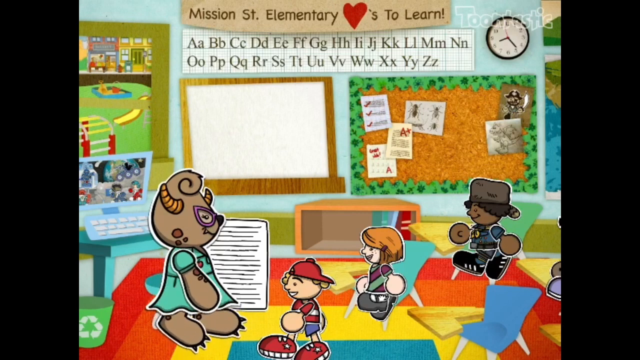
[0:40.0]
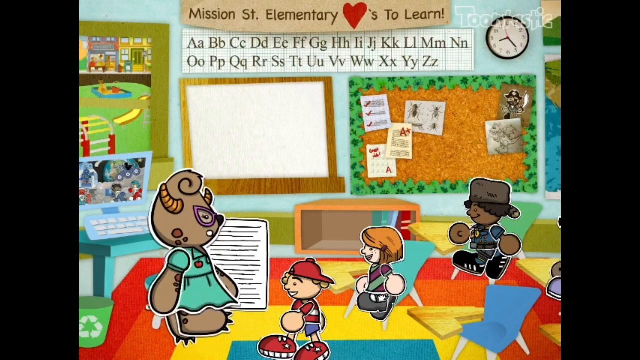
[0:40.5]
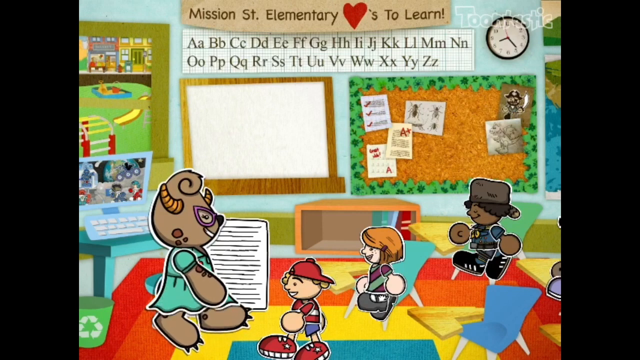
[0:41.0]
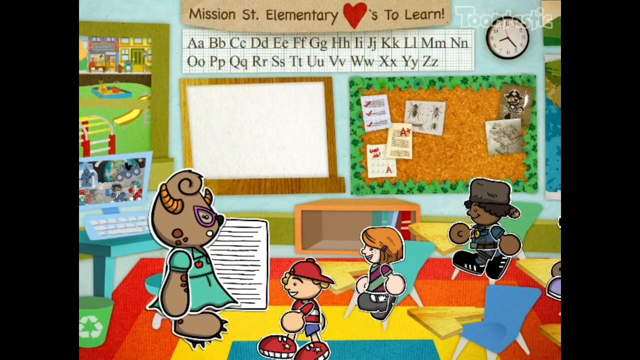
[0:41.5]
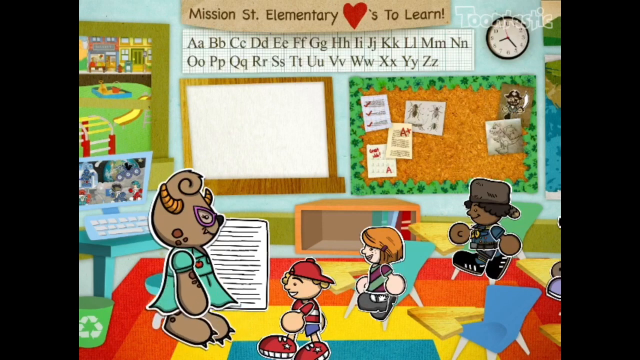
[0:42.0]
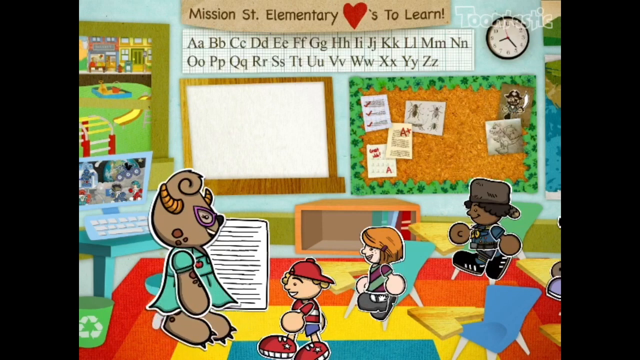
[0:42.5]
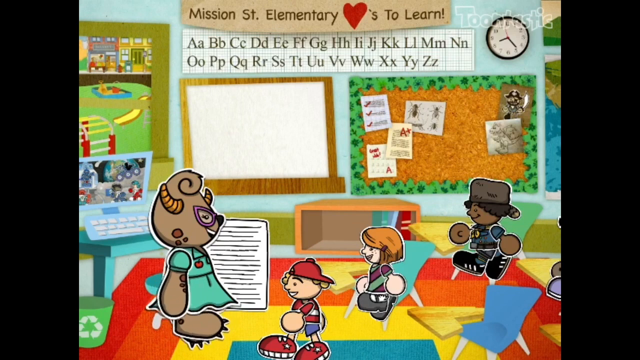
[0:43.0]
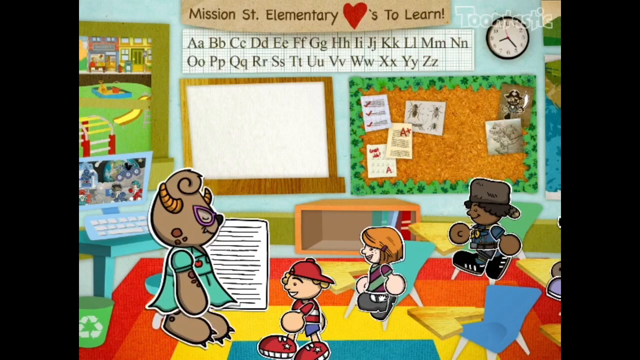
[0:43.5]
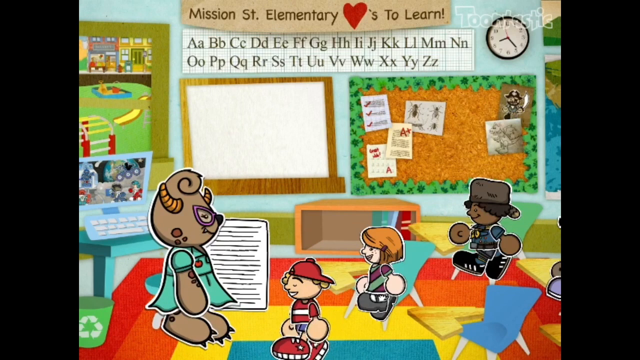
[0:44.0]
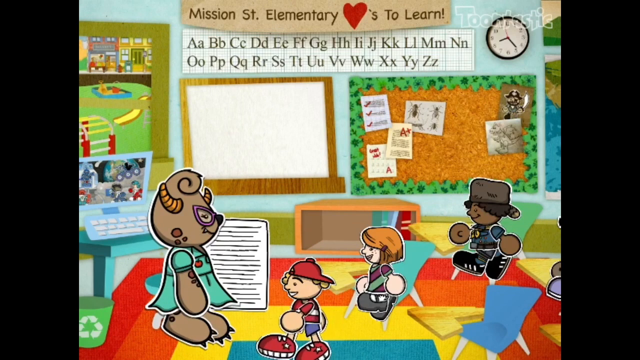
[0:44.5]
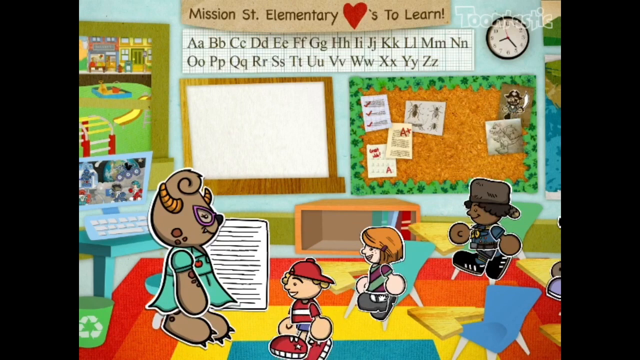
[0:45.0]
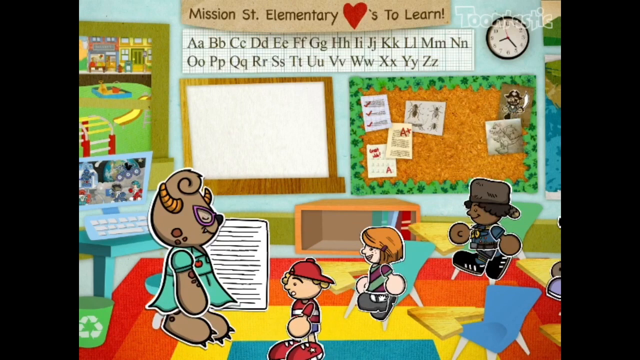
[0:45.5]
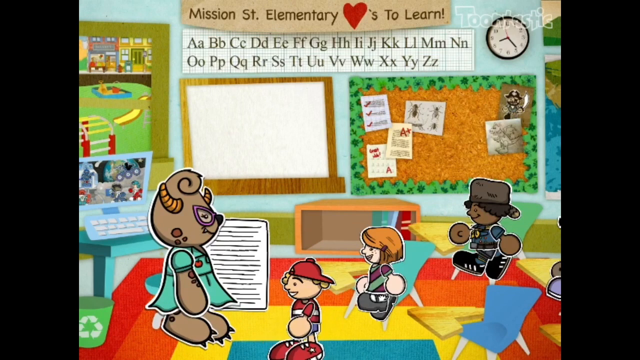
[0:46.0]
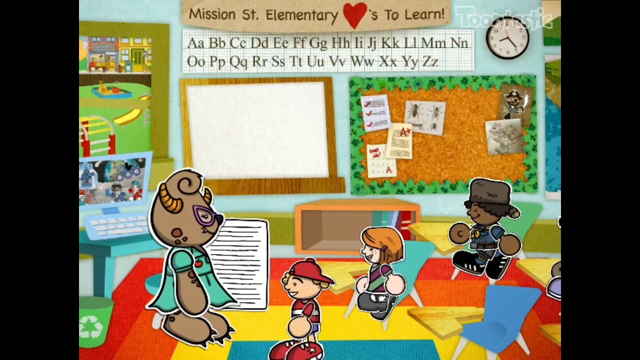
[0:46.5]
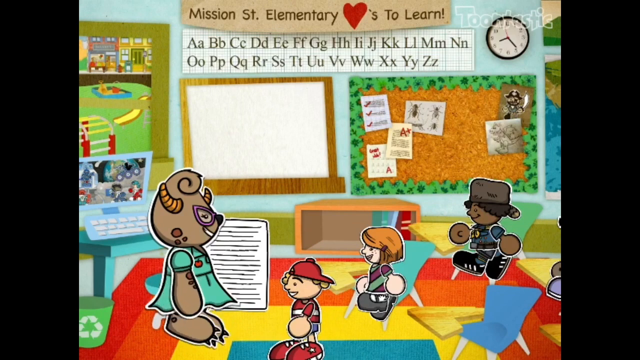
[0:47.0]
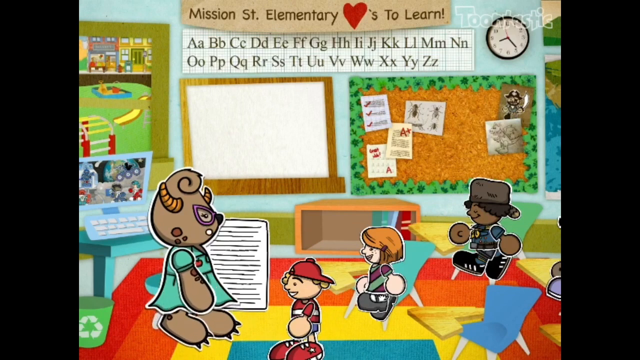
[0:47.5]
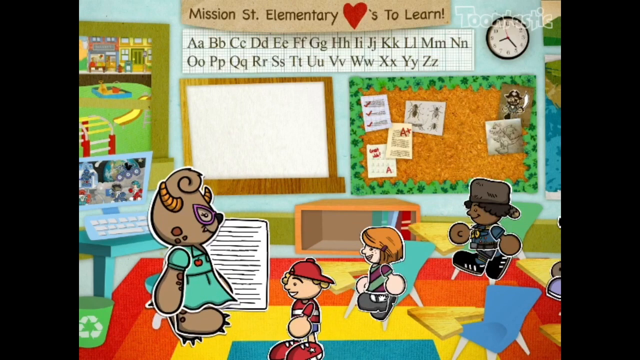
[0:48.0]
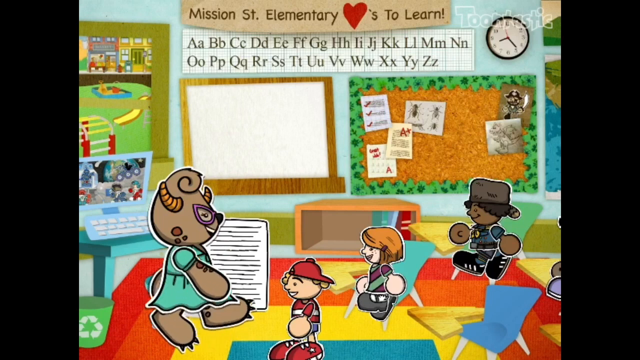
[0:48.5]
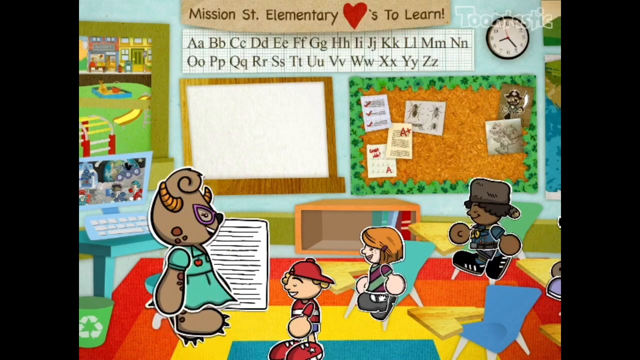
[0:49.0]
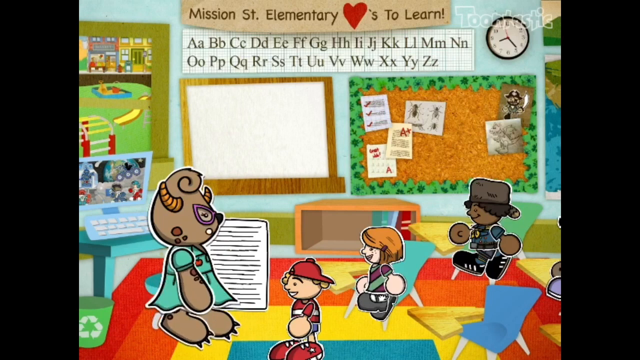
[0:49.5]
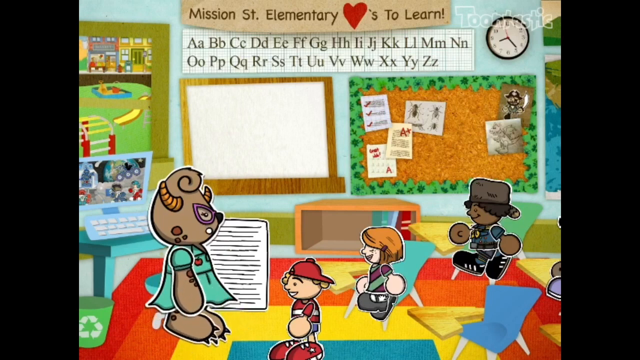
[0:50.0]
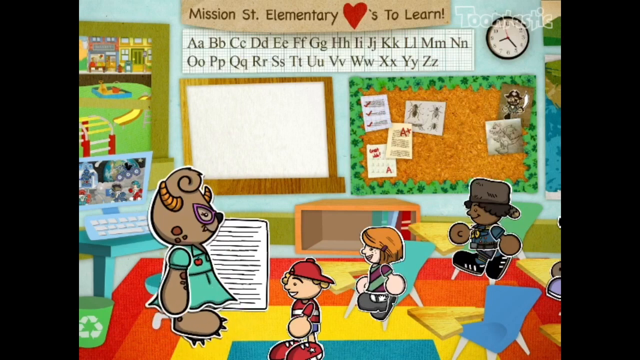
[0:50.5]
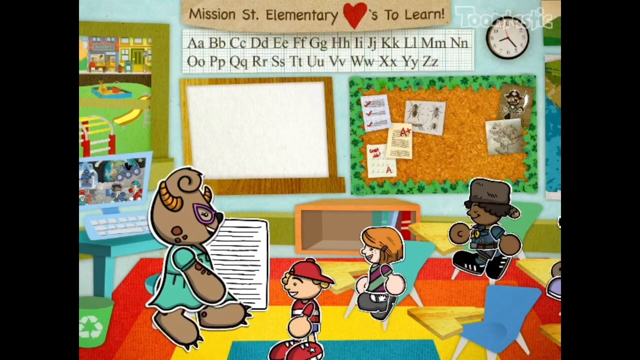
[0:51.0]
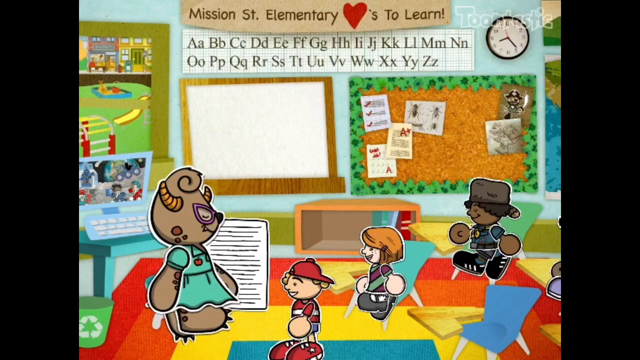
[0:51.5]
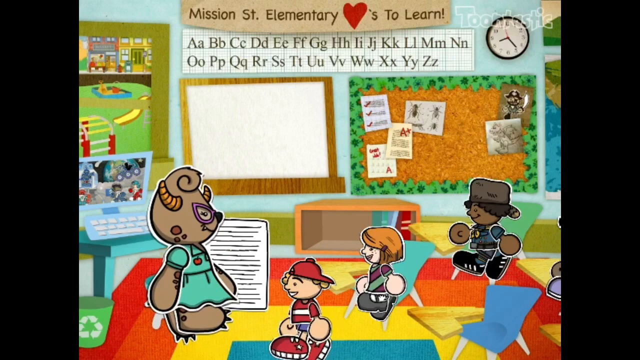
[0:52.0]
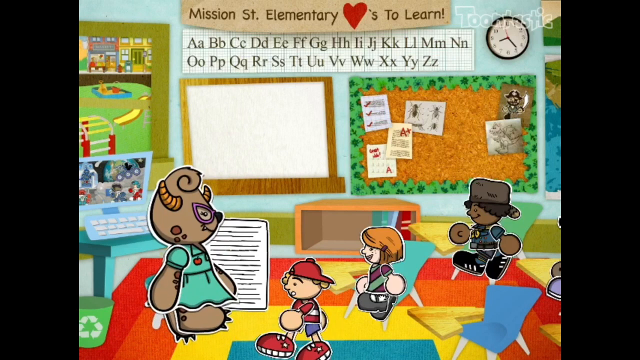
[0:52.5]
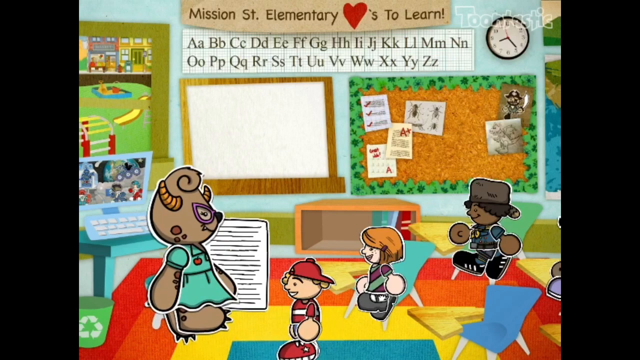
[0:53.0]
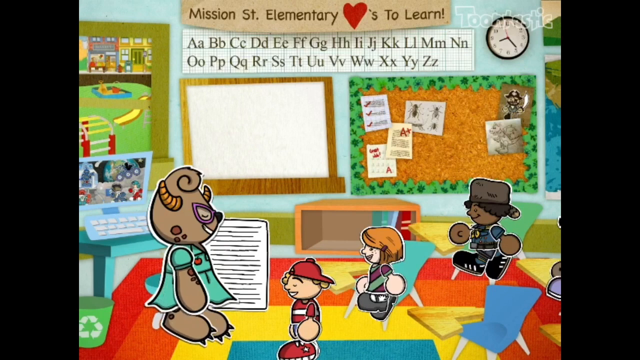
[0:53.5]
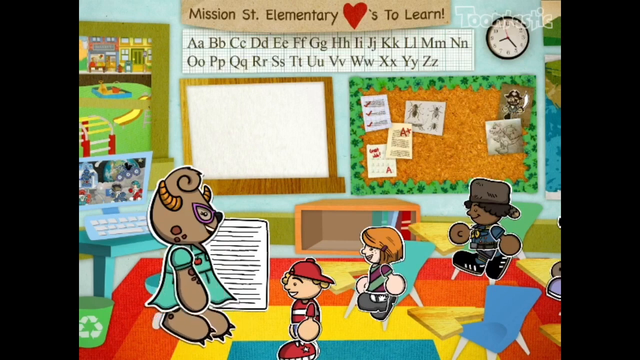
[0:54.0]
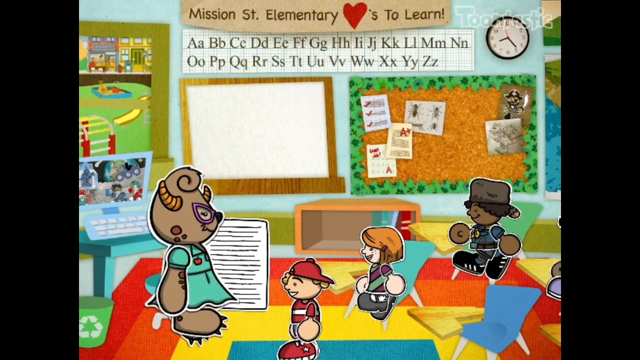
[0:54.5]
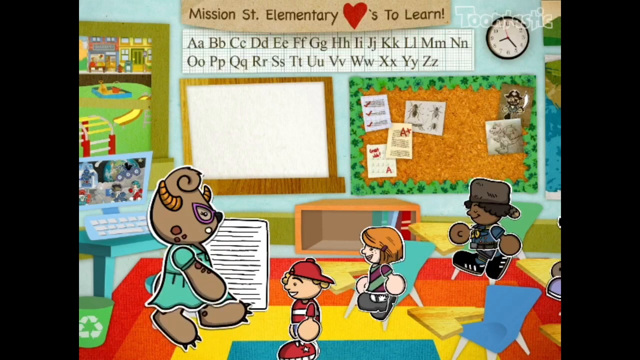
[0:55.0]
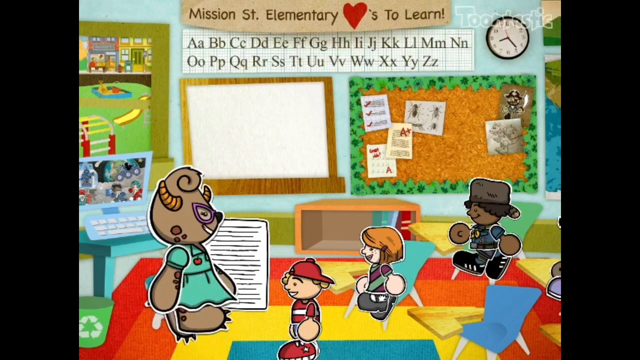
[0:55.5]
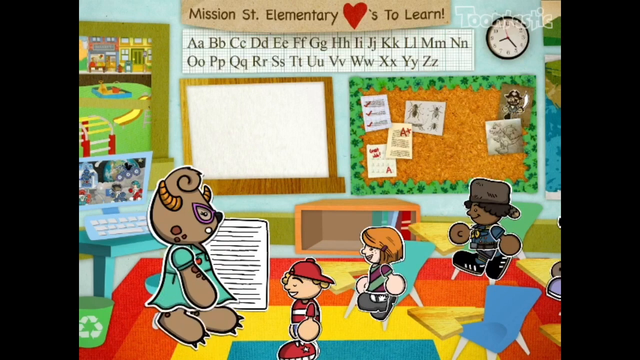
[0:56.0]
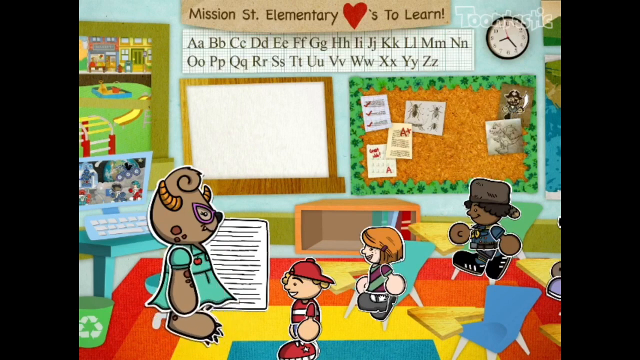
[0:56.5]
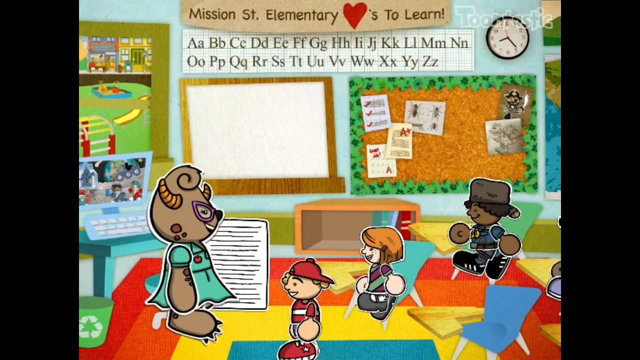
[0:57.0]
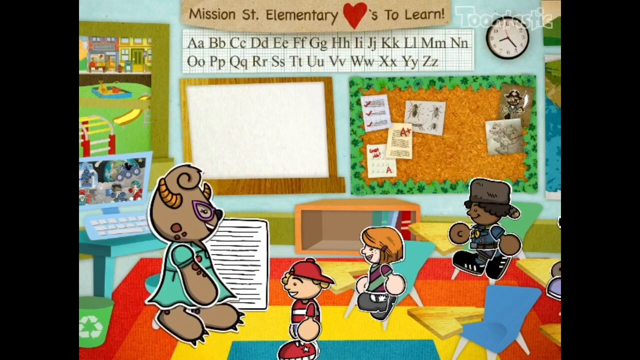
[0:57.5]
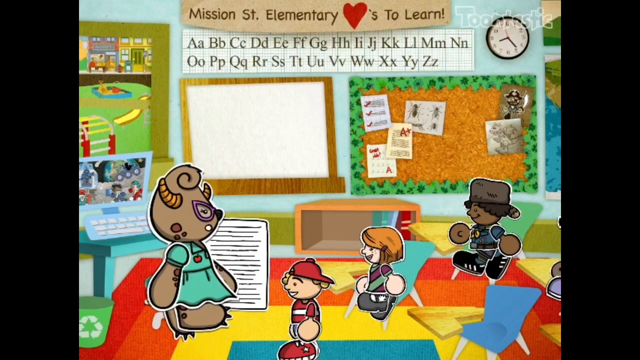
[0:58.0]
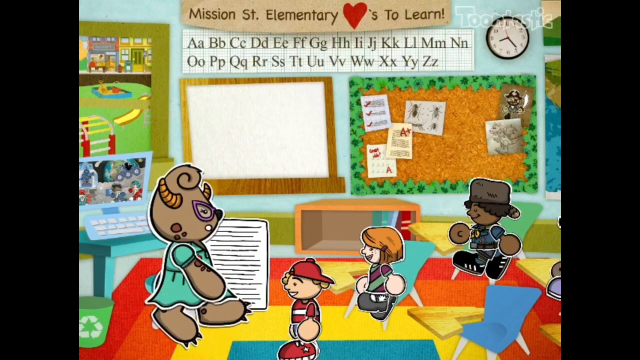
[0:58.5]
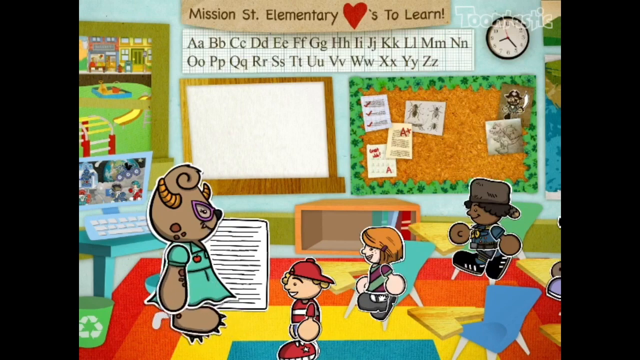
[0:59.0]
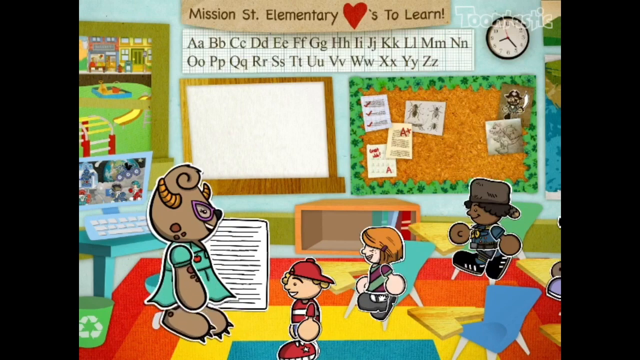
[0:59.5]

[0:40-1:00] An educator teaches the students. A blue computer shows what appears to be a website. The teacher has two yellow horns and wears purple glasses and a very aqua-colored dress; she has no shoes, and the claws on her feet are visible. Her feet make a walking motion but she does not move, so she looks like she is jogging in place. The child with the red hat also moves in place, moving his hands and legs back and forth. The teacher walks in place when she speaks, and the student walks in place when he talks. The boy appears to be first, the girl with the orange hair is in the middle, and the African American child is in the far background. A clock is on the far right and a whiteboard is in the center. What appears to be a playground is at the top left, along with outside buildings.